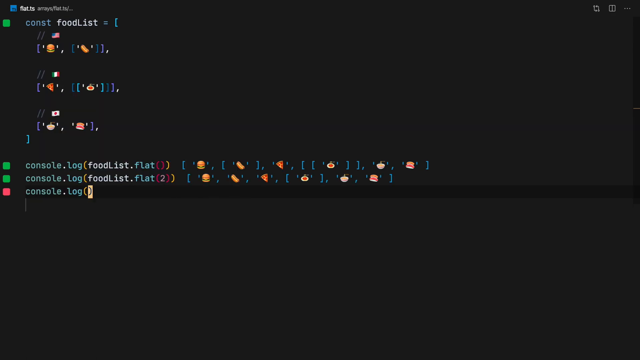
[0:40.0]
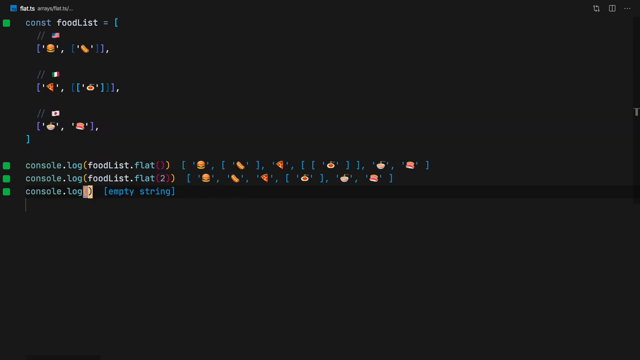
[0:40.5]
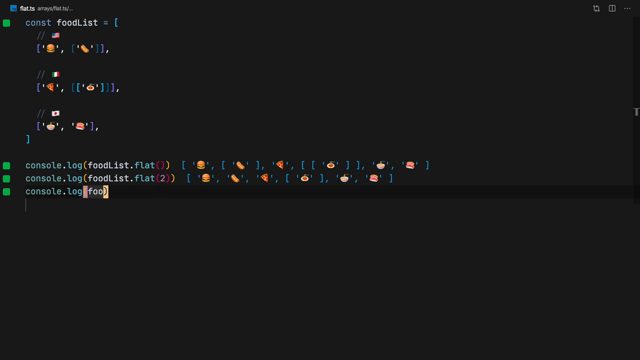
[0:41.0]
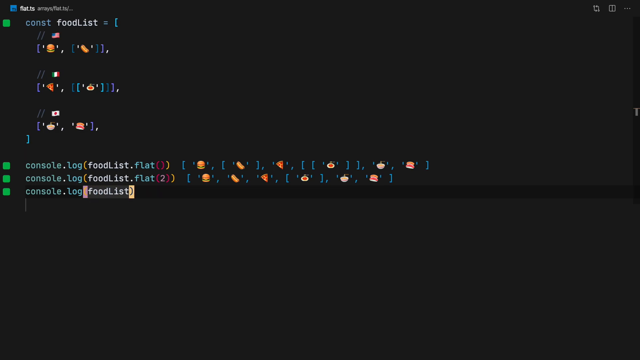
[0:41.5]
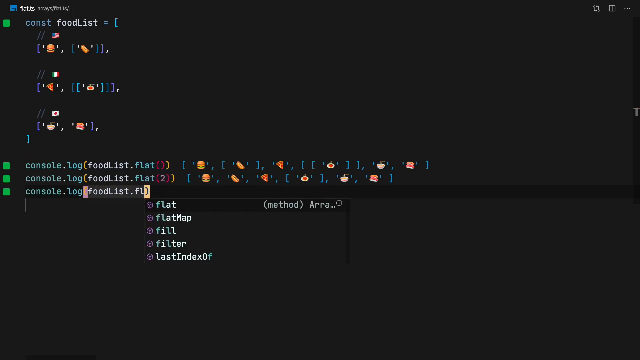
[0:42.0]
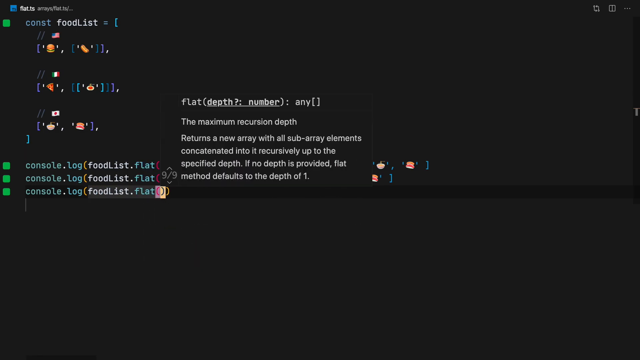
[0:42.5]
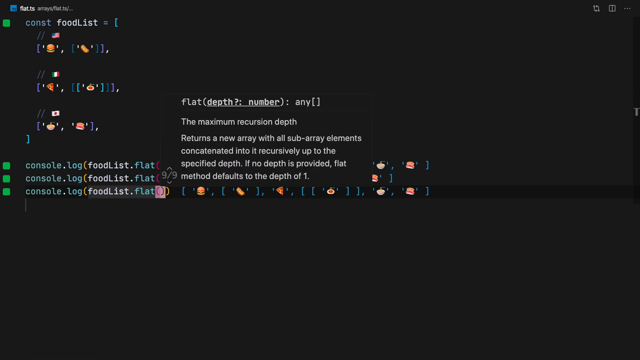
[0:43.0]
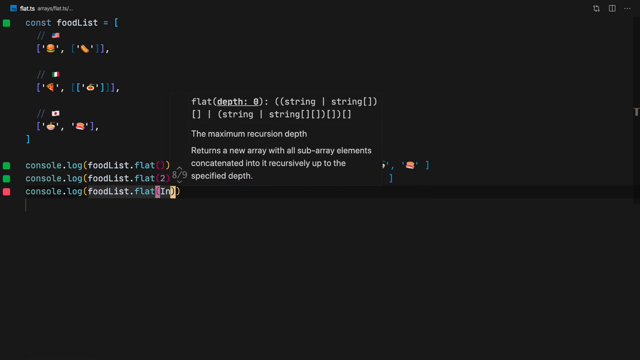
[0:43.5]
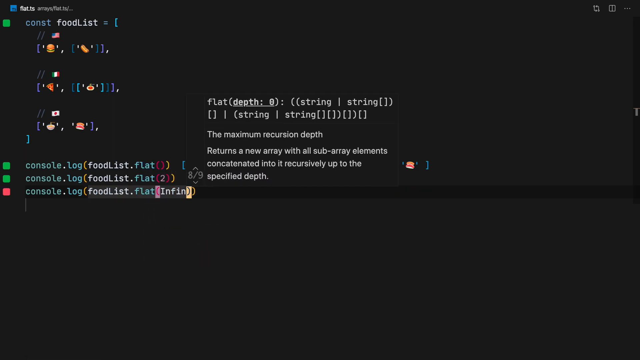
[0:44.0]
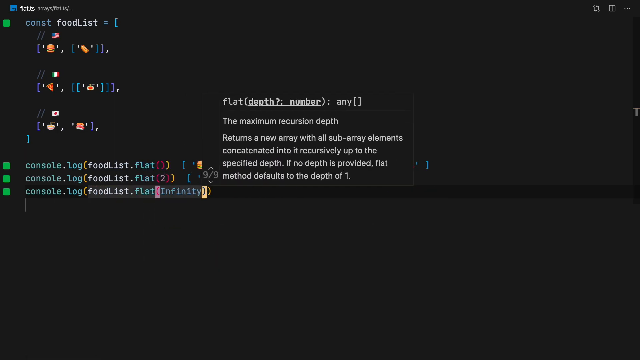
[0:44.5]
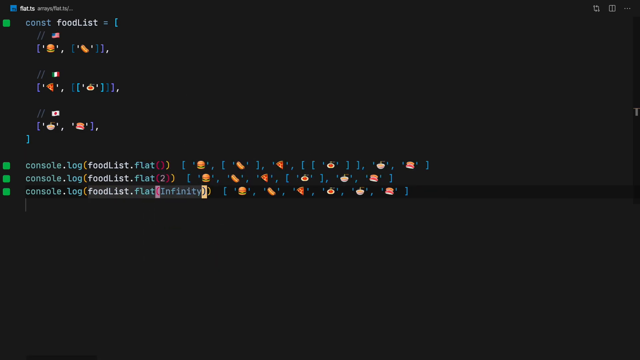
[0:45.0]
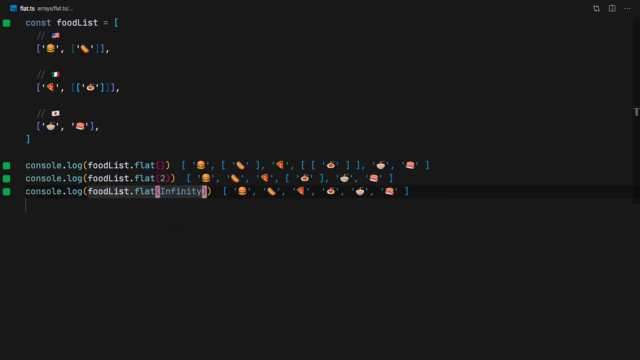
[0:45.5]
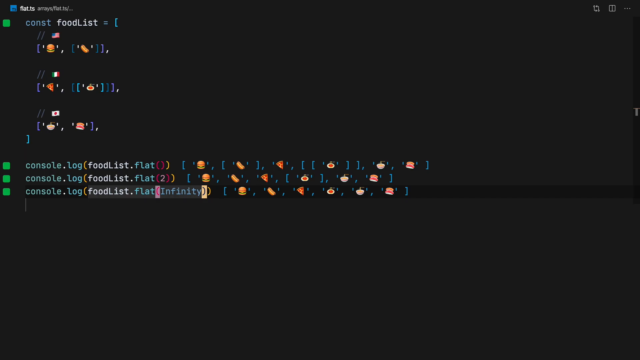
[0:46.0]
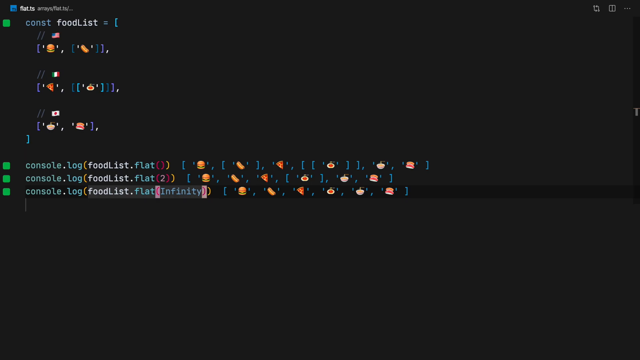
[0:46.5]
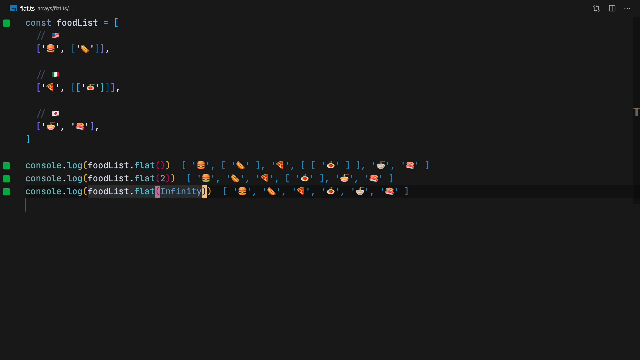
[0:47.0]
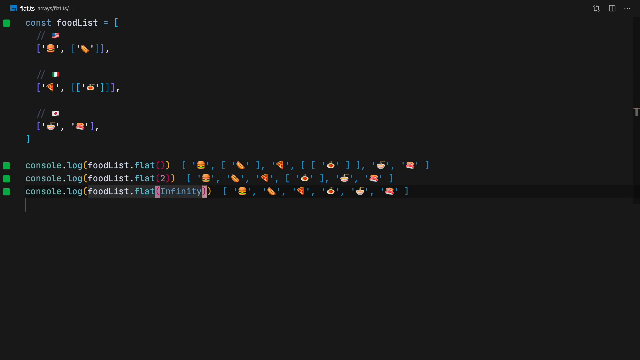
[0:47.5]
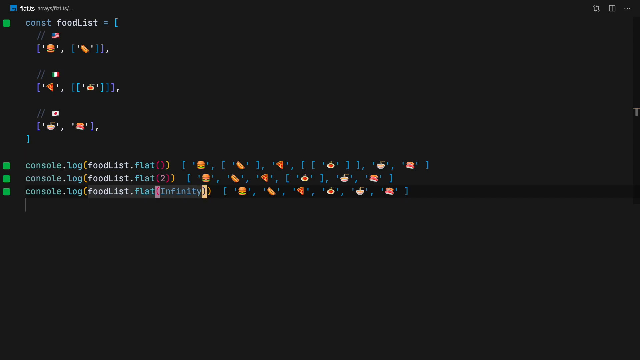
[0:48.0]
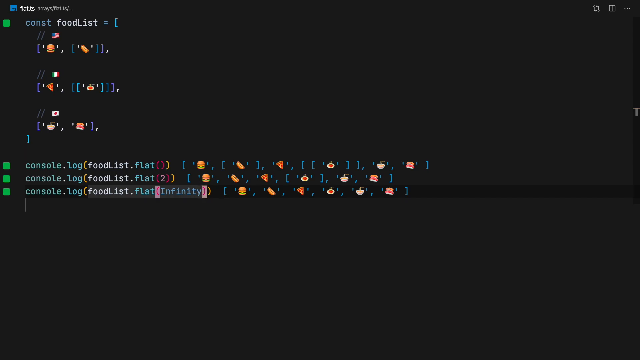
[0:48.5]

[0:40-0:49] The user types out the same function, console.logFoodList. This time, instead of the base food list of 0 or the second food list with parameter 2, the parameter of the third food list is set to infinity, shown by the word infinity following flat in parentheses. This third food list differs from the first two in that no food items are separated from others by brackets: all the food items are in one set of brackets, whereas the first food list contained four sets of brackets and the second contained two.